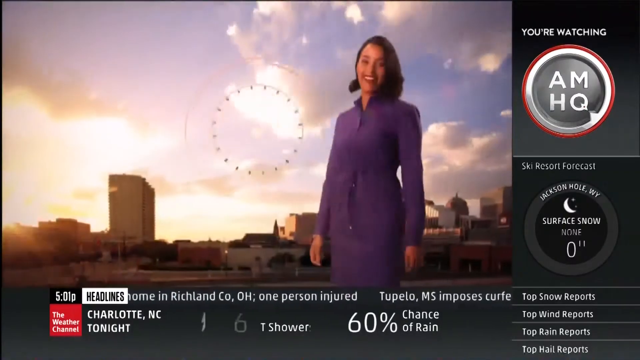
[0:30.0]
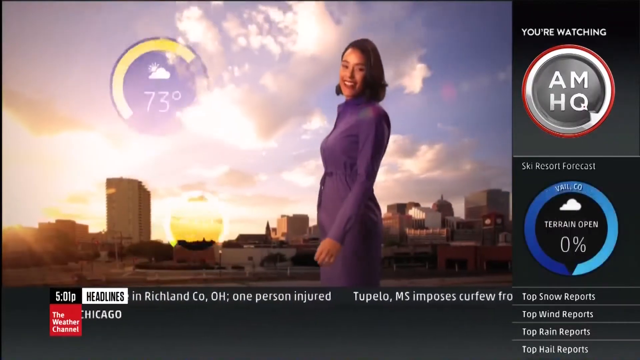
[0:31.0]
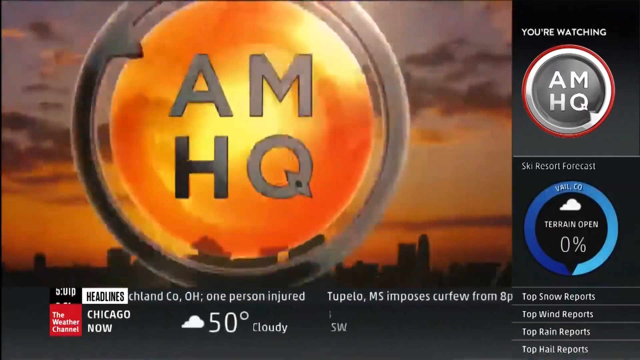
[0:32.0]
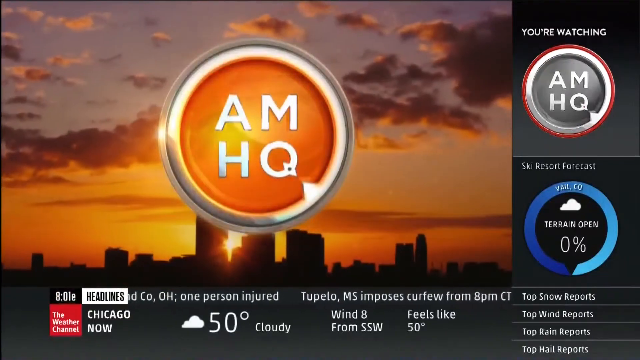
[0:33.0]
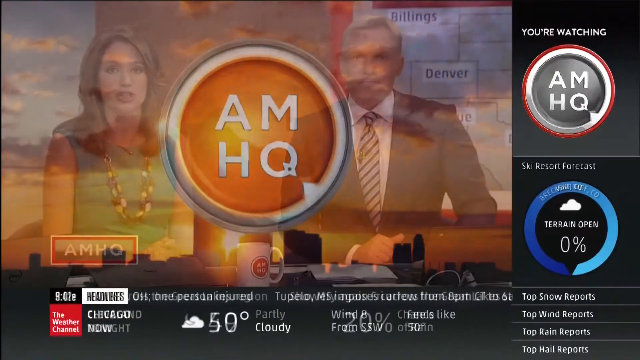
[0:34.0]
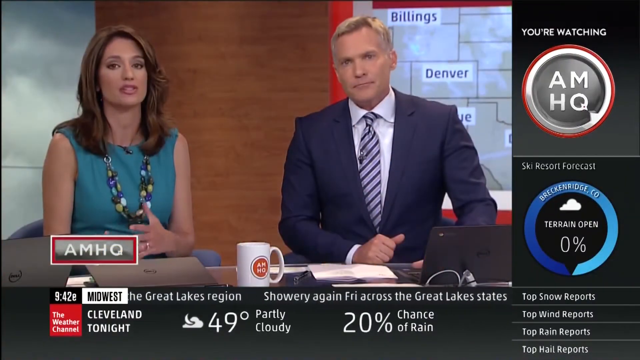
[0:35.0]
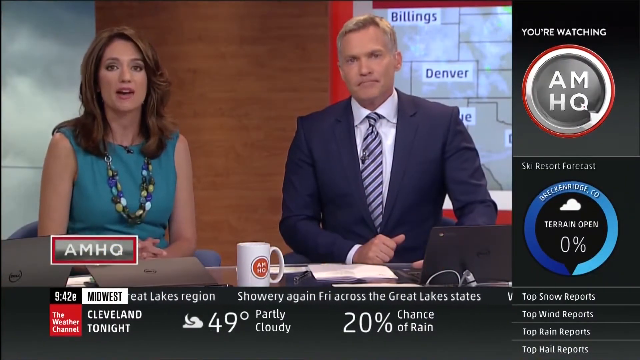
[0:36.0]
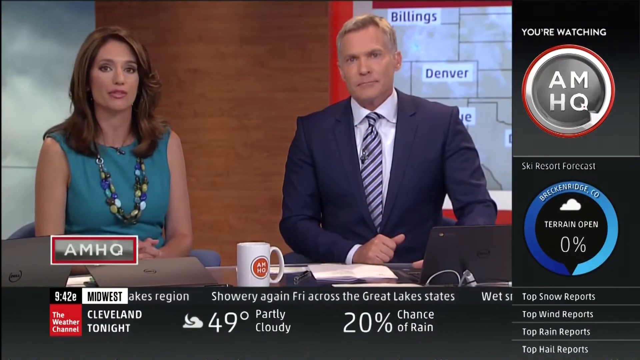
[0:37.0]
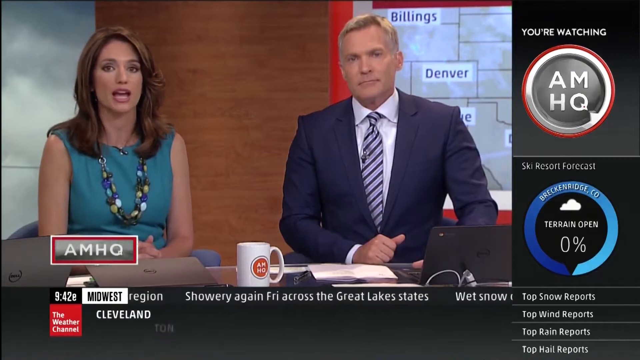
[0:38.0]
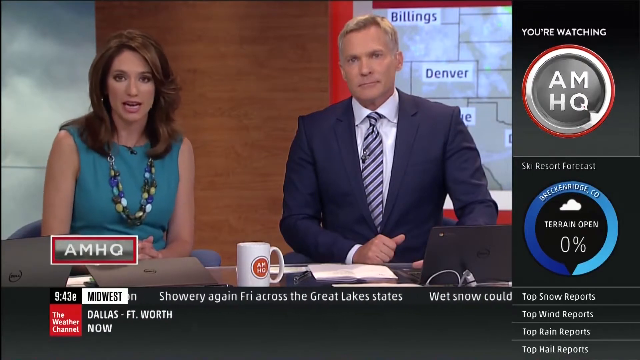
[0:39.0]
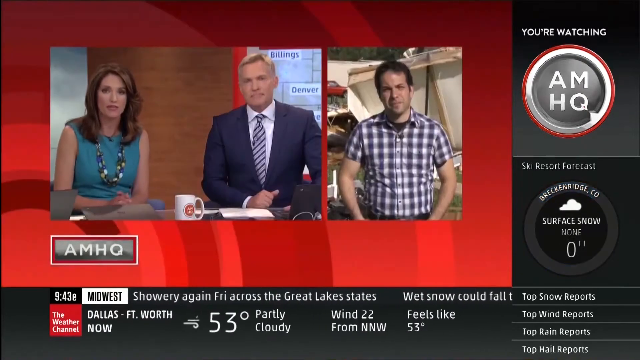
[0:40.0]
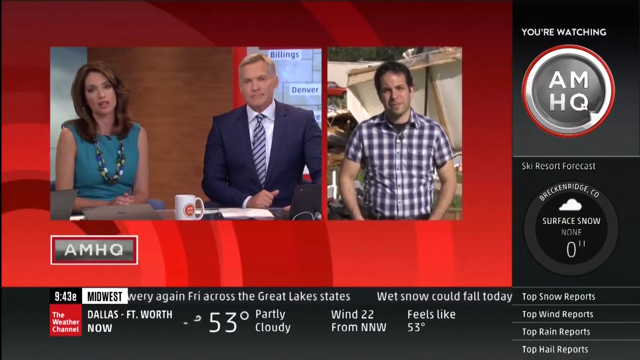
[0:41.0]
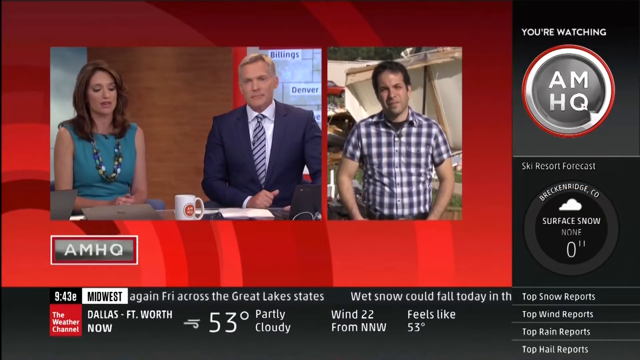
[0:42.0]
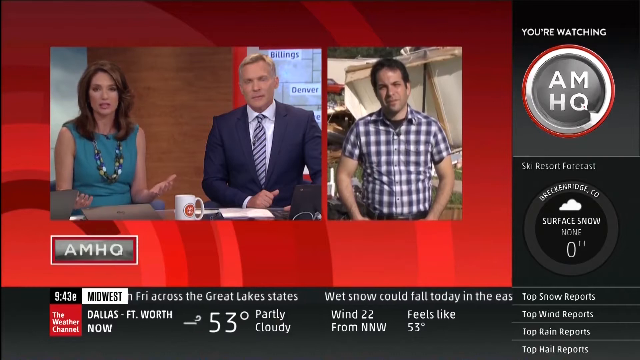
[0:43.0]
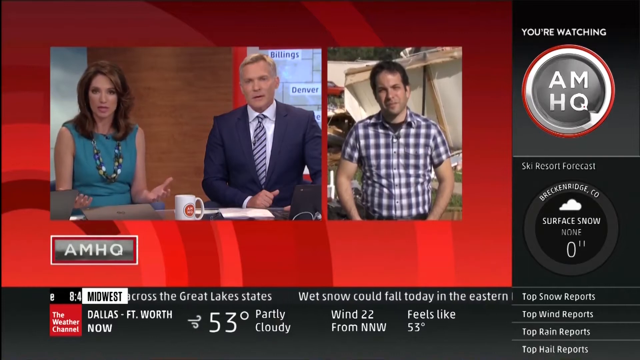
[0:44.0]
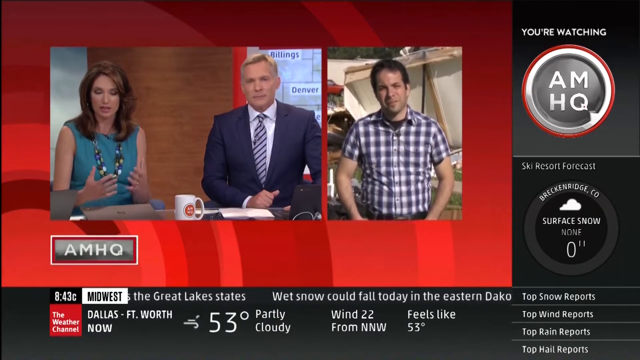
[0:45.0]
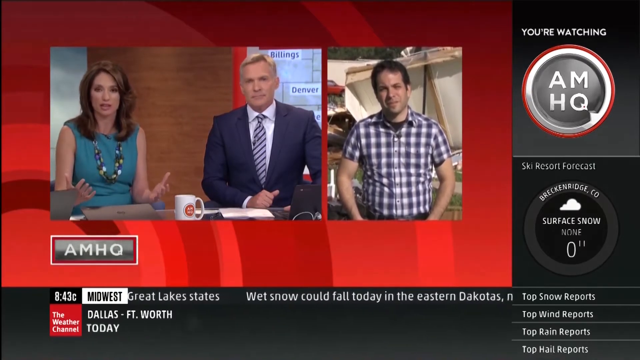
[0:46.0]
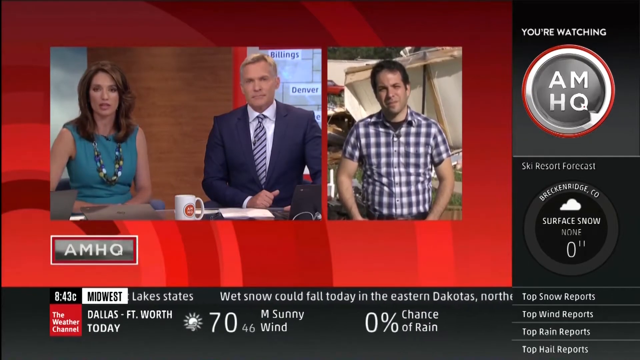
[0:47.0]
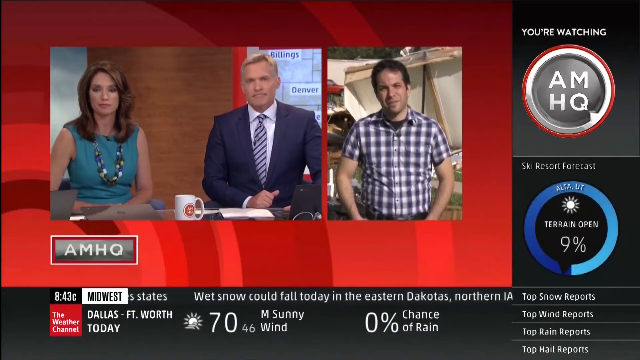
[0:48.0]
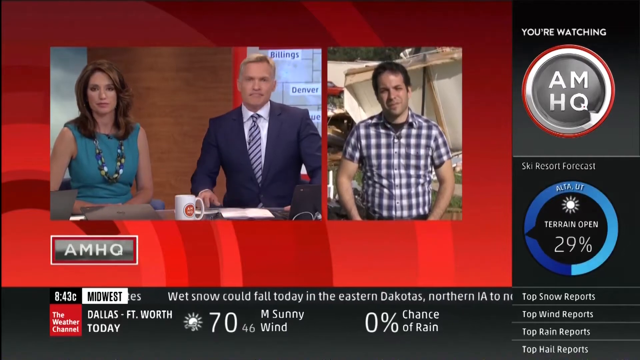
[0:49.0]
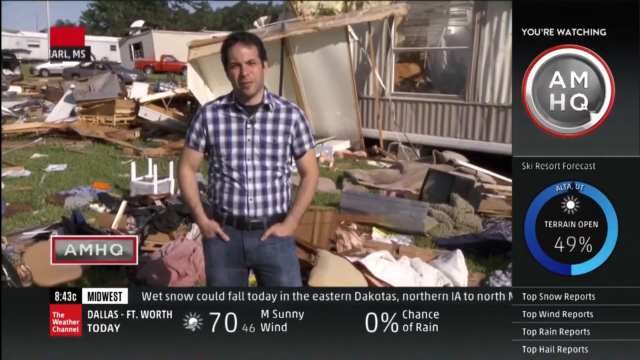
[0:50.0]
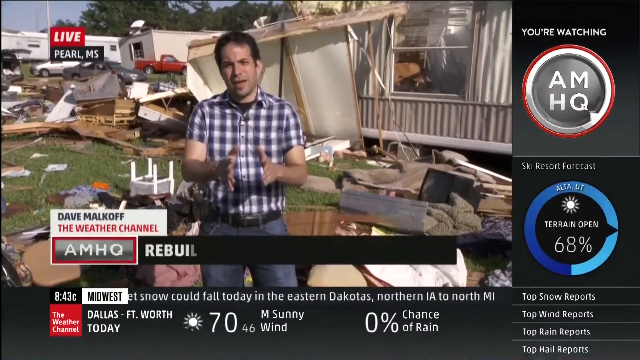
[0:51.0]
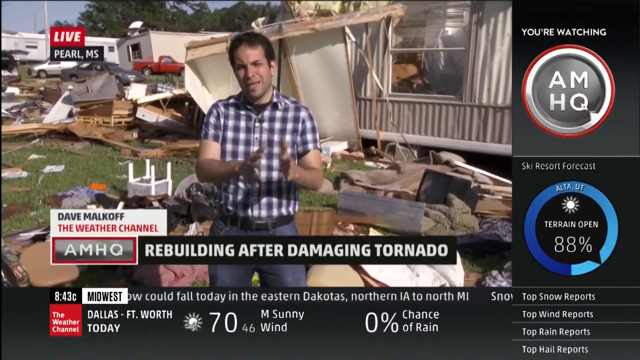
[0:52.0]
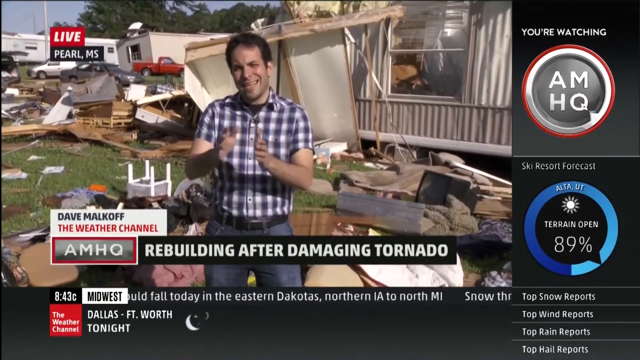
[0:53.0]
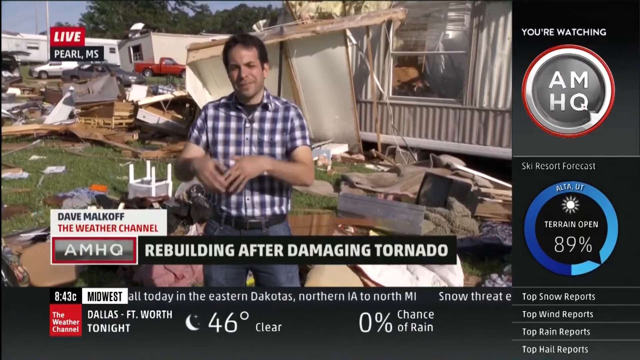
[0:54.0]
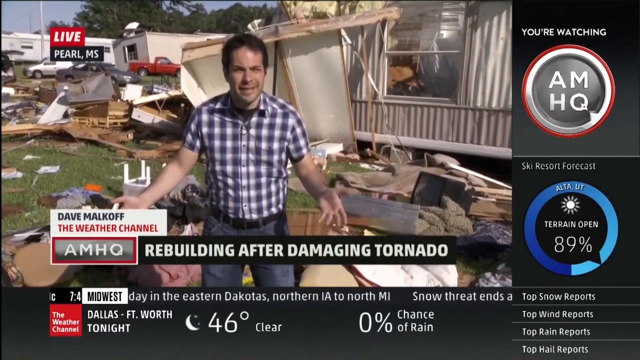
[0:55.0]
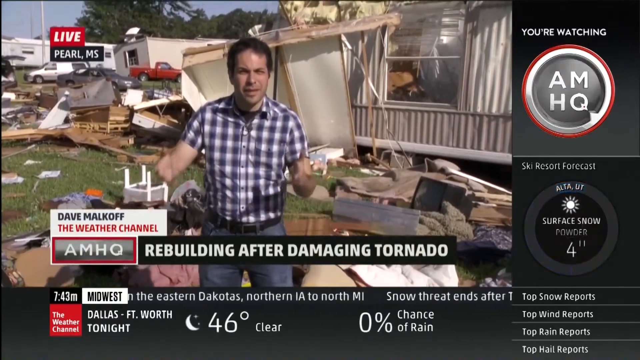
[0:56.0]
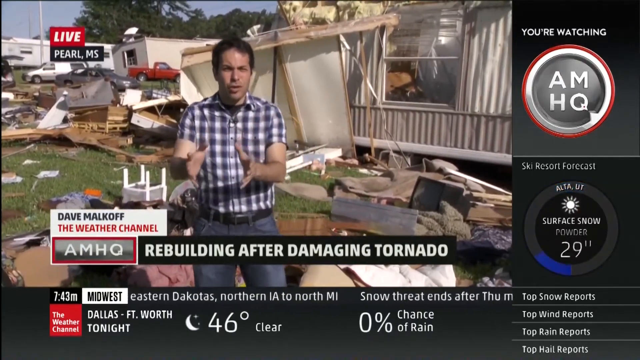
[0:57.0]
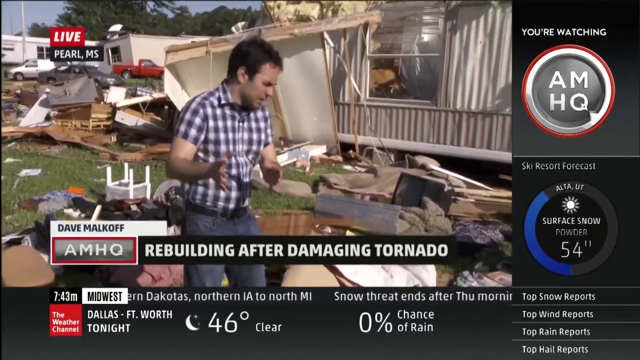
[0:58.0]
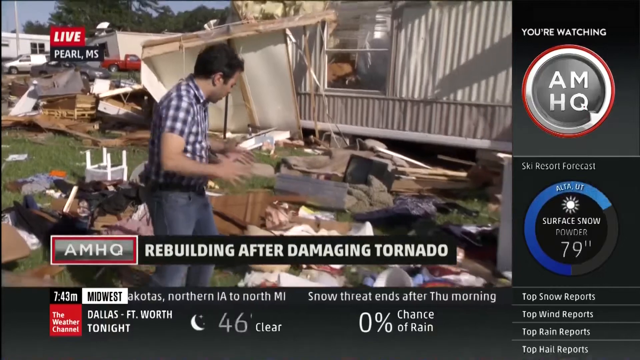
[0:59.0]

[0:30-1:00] An illustration shows how the place might look after rebuilding following the tornado. The broadcast comes from AMHQ, where two newscasters, a female and a male, sit with a cup on the table. The main newscaster wears a blue suit with a white t-shirt and a blue tie with white stripes, and the woman wears a green gown with a bead around her neck. Live video from another location where a tornado destroyed property is also shown.